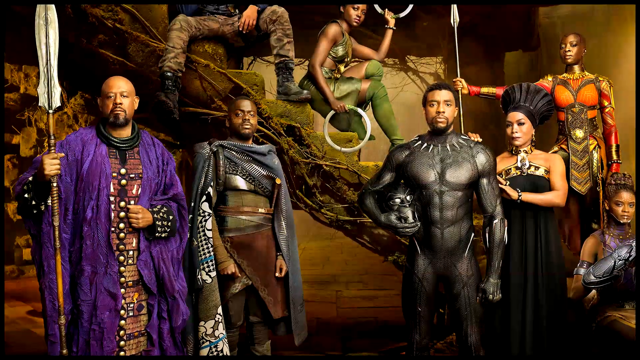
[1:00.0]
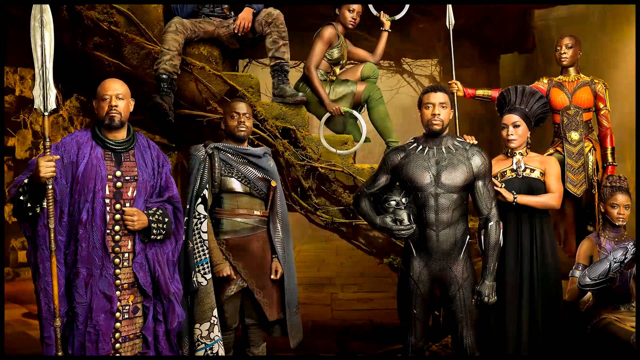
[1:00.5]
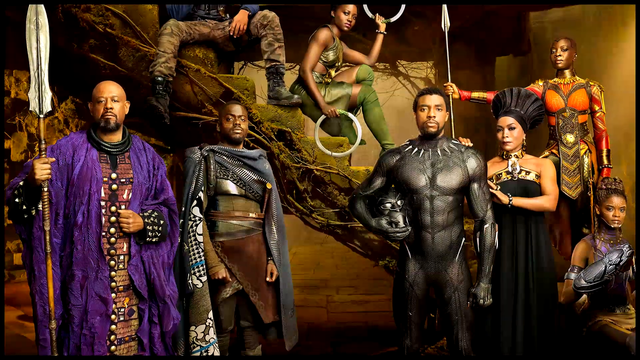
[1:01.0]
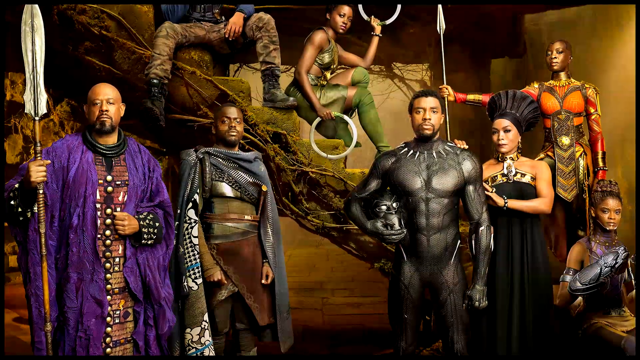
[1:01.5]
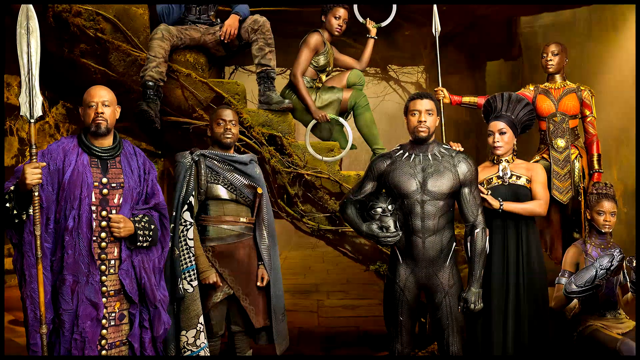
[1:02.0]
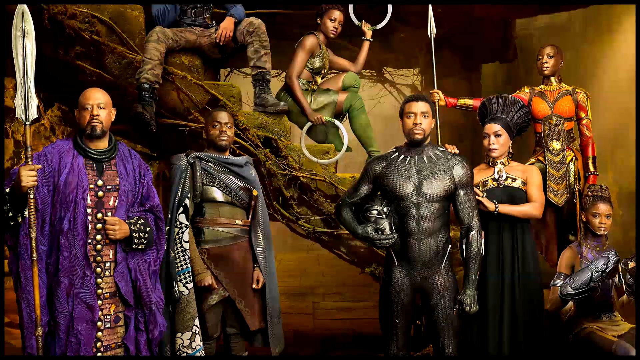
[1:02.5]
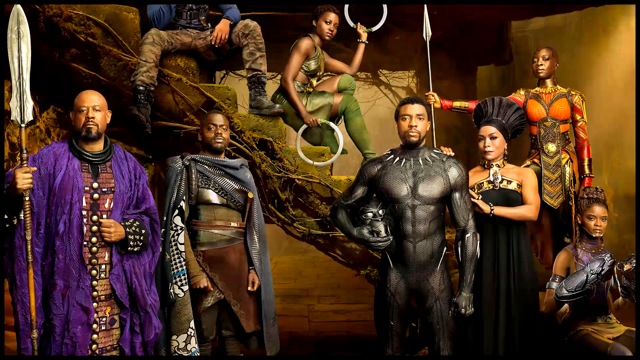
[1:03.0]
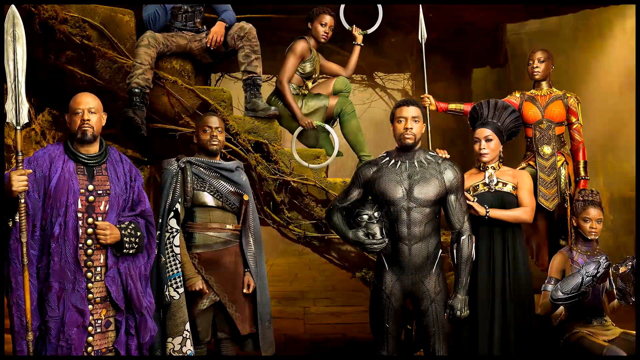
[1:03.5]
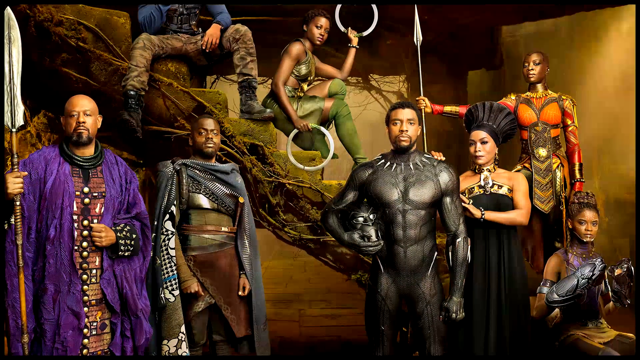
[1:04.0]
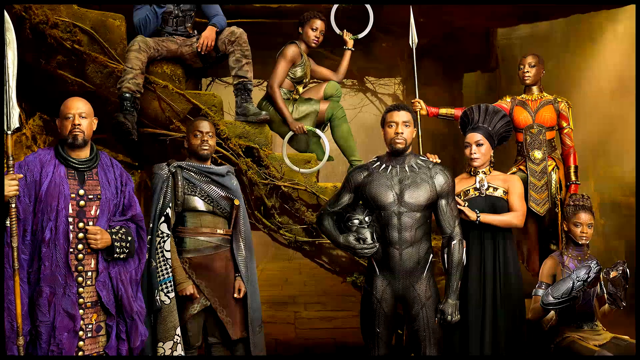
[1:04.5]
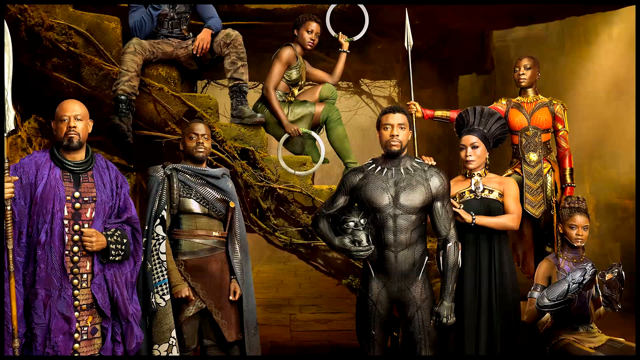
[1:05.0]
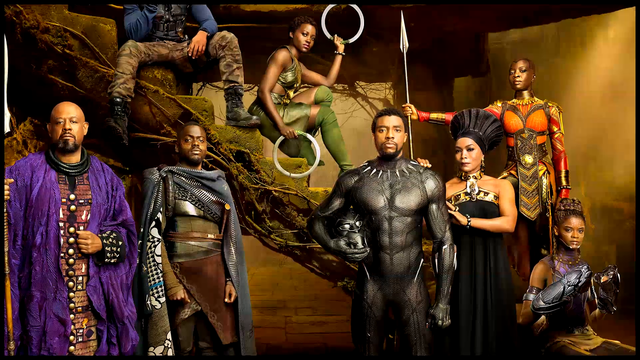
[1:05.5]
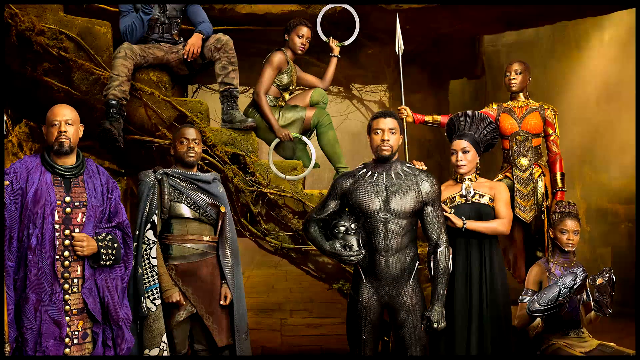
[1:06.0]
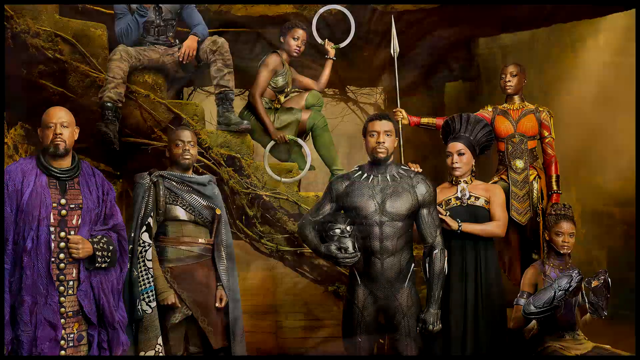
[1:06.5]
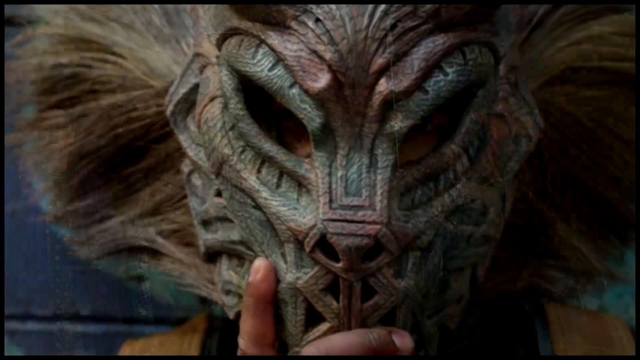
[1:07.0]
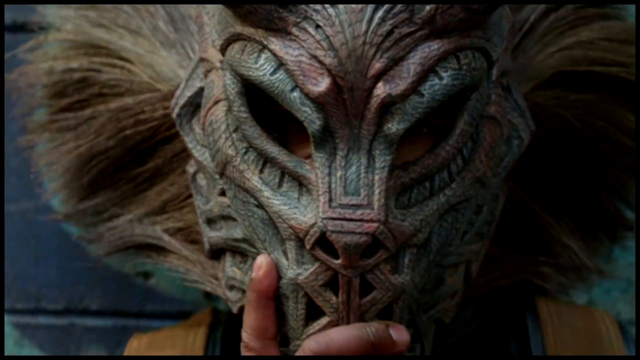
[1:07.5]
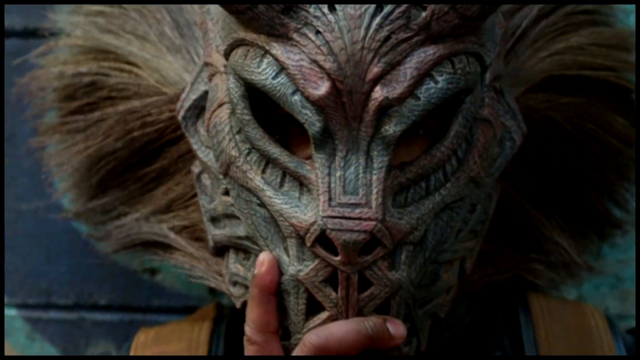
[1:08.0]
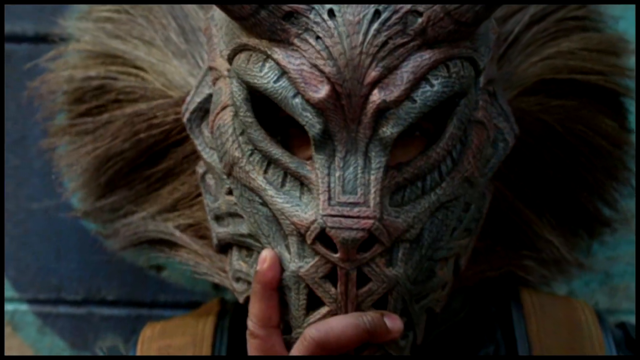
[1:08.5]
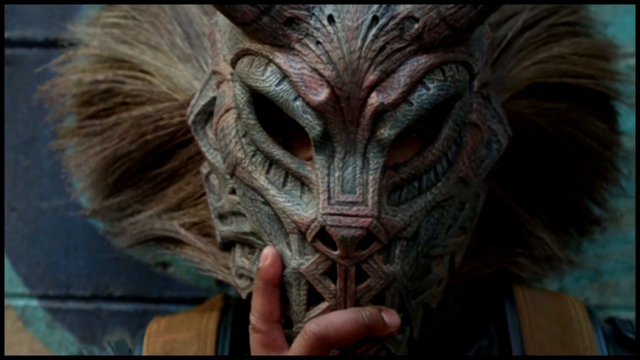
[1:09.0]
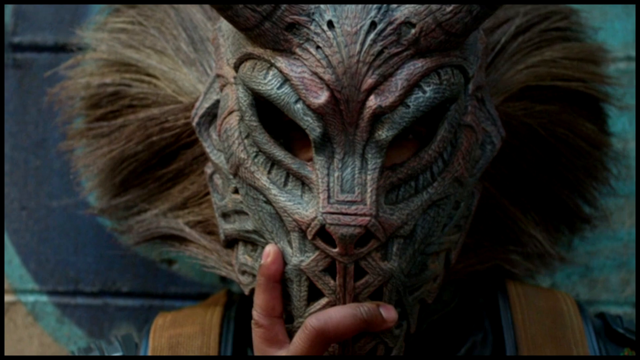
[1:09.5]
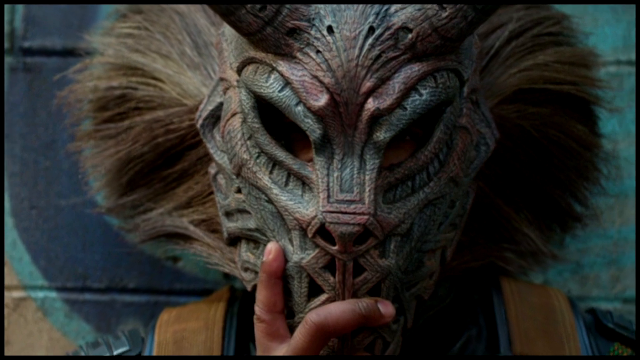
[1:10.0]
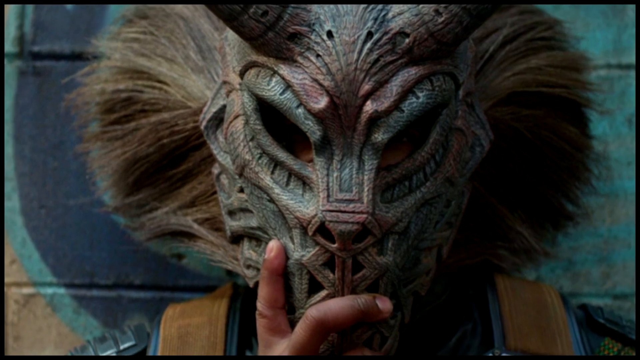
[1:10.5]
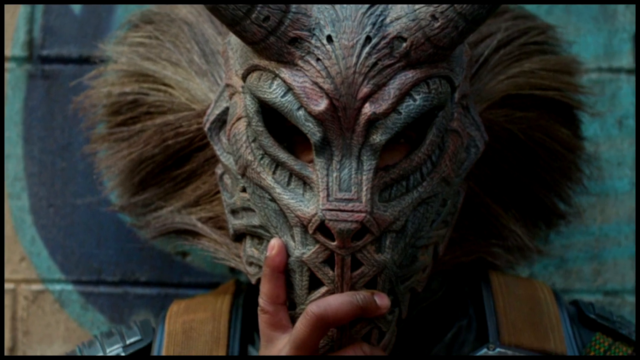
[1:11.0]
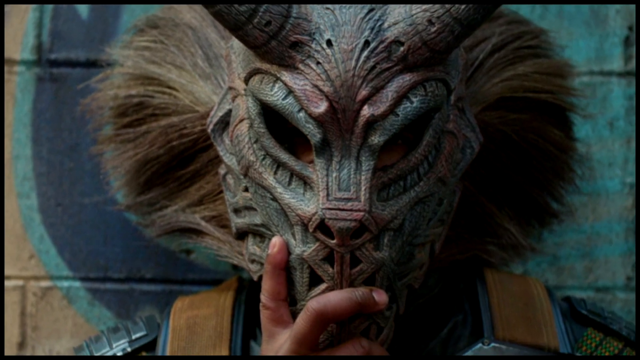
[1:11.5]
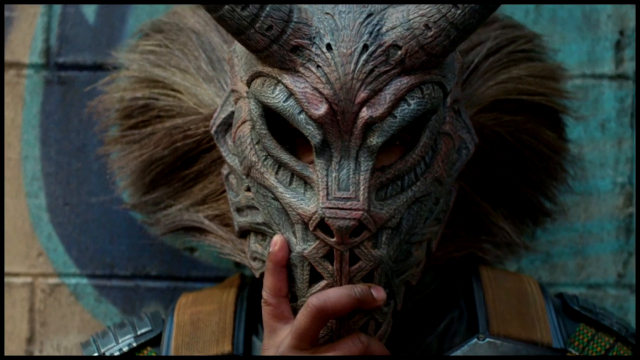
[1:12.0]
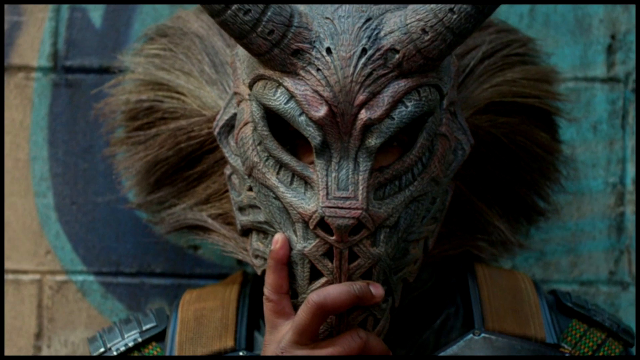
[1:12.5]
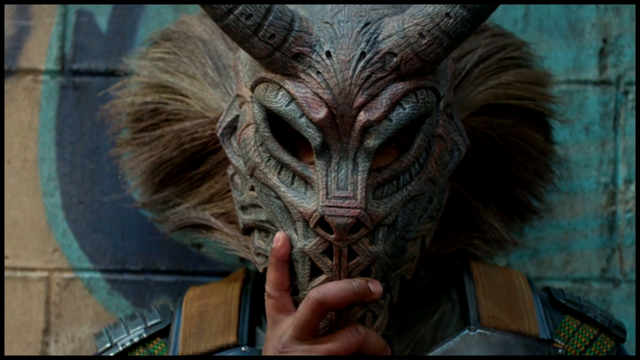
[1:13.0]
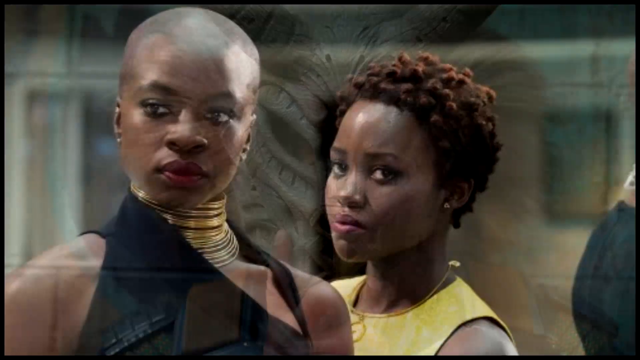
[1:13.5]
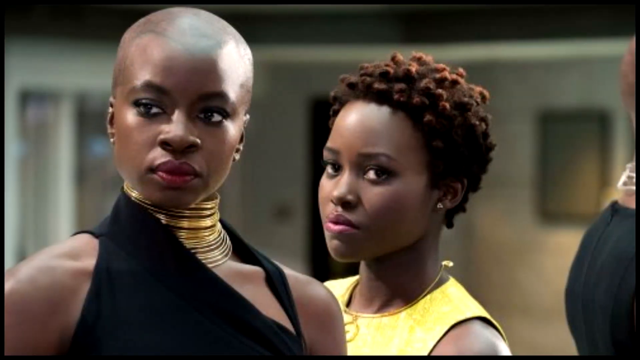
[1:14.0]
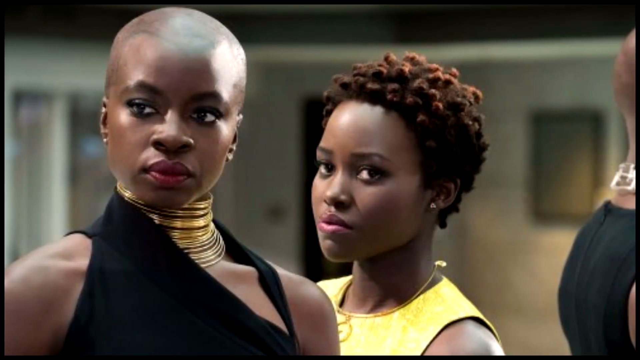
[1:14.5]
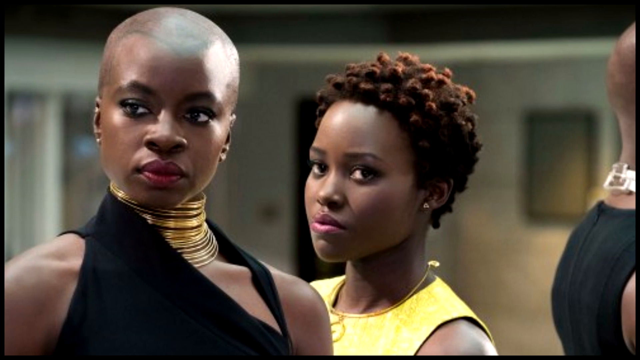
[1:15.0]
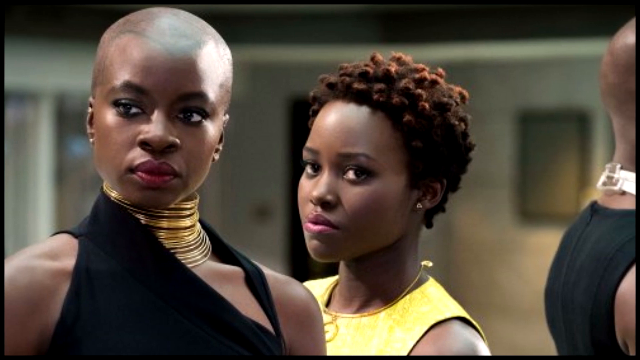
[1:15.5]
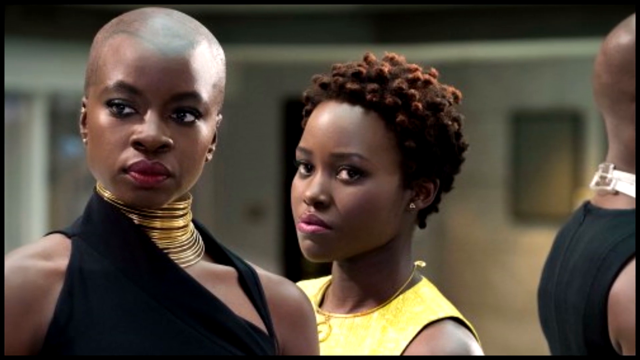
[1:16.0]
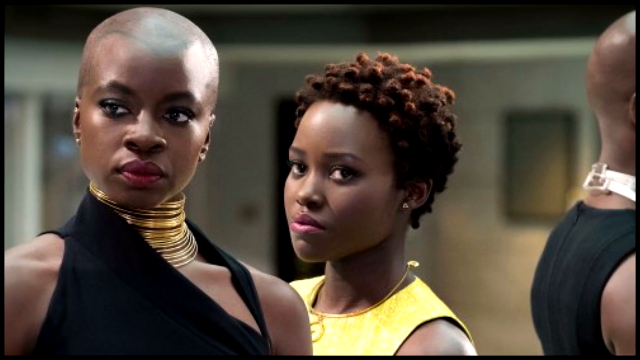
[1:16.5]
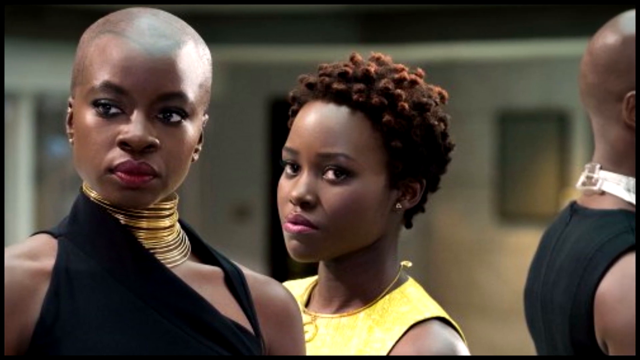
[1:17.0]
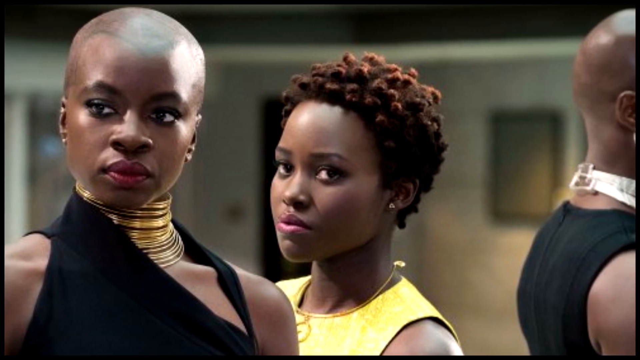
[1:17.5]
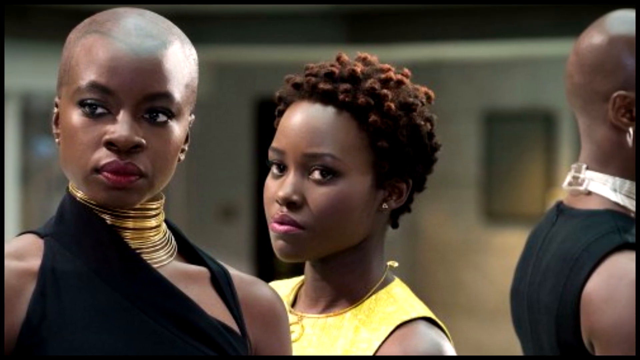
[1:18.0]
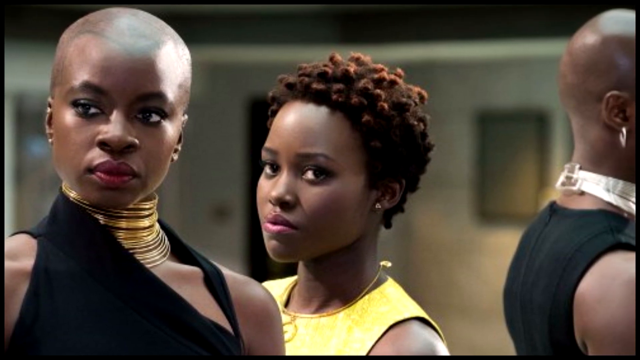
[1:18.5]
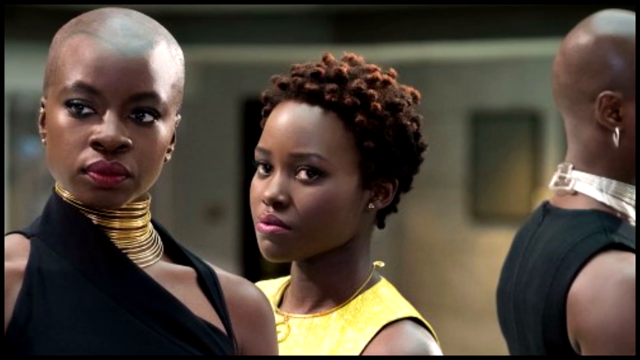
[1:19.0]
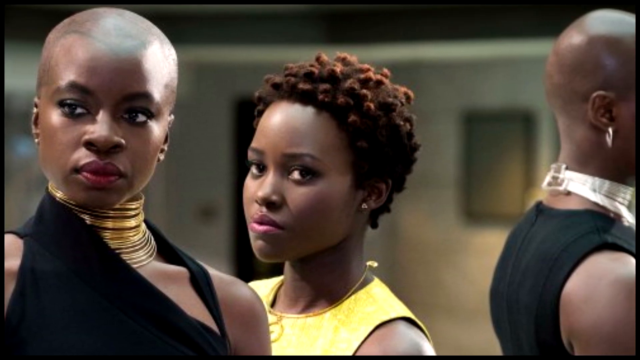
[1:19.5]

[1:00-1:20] Four characters stand next to each other, surrounded by four others. There is the bald man with a beard, a purple cloak and a sharp spear. Next to him, the young man in a gray cape has a sword tucked into his belt and looks at the camera with a serious expression. Next to him, the Black Panther holds his mask in his right arm against his right torso. Beside him is a woman in a black hat and a black dress embellished at the top that attaches around her neck. A young woman next to her looks at the camera very seriously, and behind her a woman in orange armor stretches out her arm, holding a spear pointed upward. The woman in green holds two round rings, and next to her appears to be a man, of whom only his legs in camouflage pants and black boots are visible. Then a hand grasps a mask that almost looks like a lion's face but also has horns. The horns are gray, the mask is gray, pink and pale green, and the blonde mane has some dark brown hairs in it. It is against a wall with some turquoise paint on it. Next comes an image of two Black women. One has shorn hair, wears makeup and lipstick, and has stacks of gold necklaces around her neck. She wears a geometric shirt, her shoulders are bare, and she looks to the right seriously. The other woman has reddish-brown hair knotted tightly, looks out of the corner of her left eye to the left, and wears a yellow sleeveless top. Behind them there appears to be a mirror reflection.